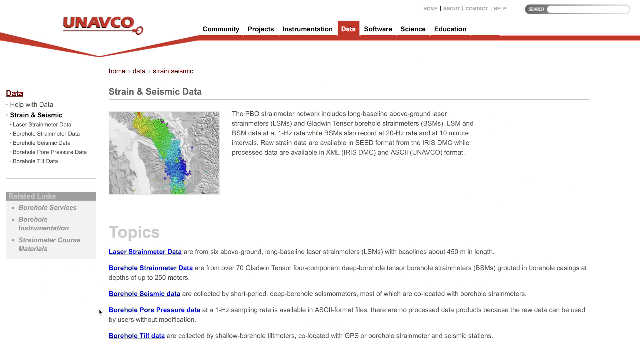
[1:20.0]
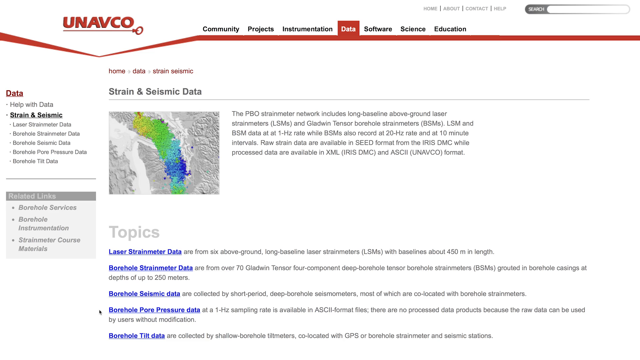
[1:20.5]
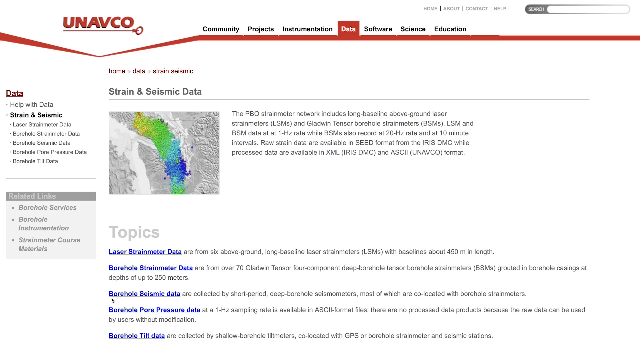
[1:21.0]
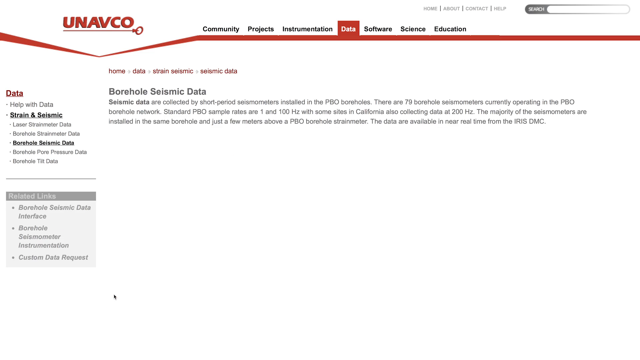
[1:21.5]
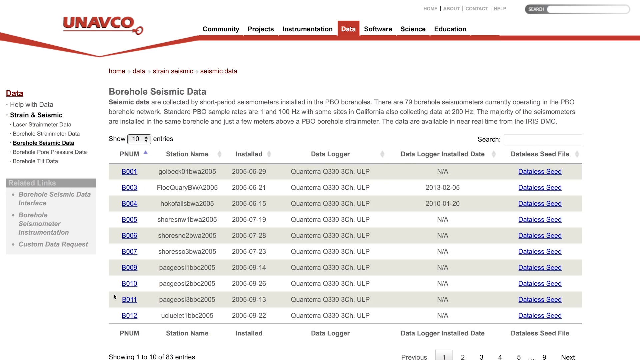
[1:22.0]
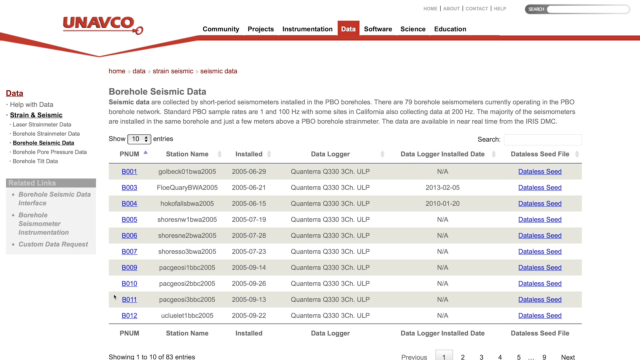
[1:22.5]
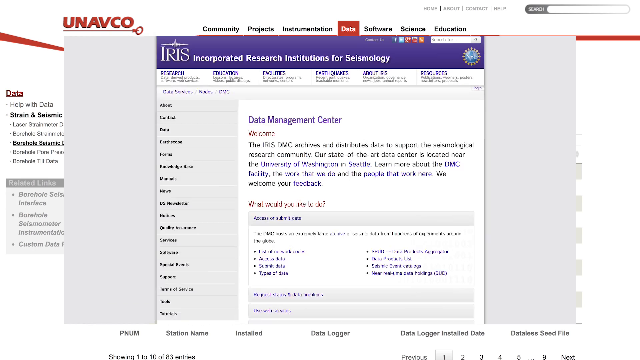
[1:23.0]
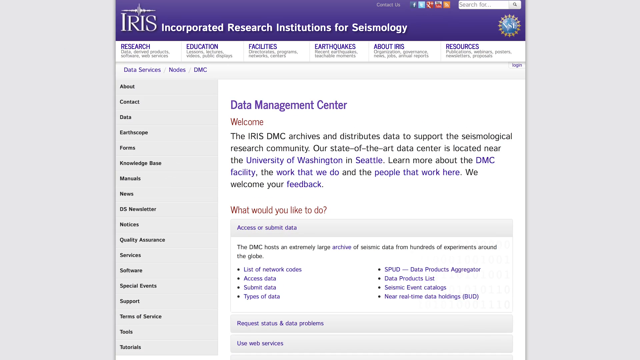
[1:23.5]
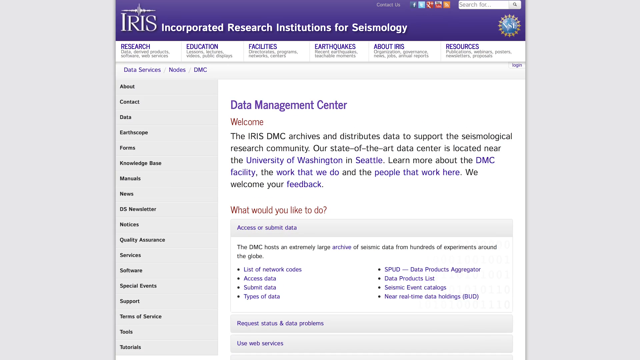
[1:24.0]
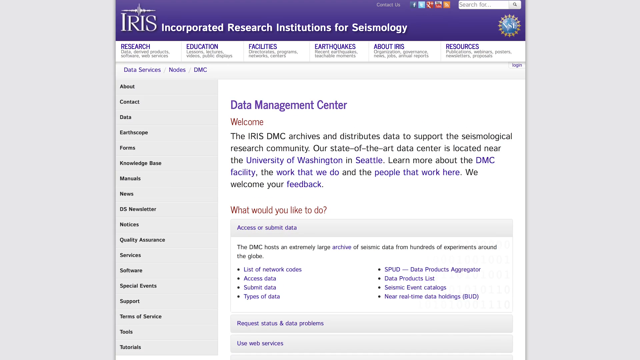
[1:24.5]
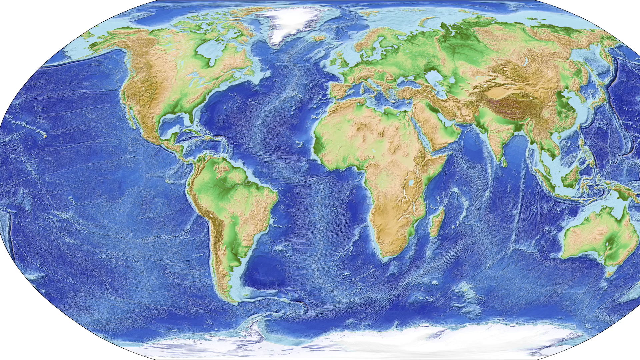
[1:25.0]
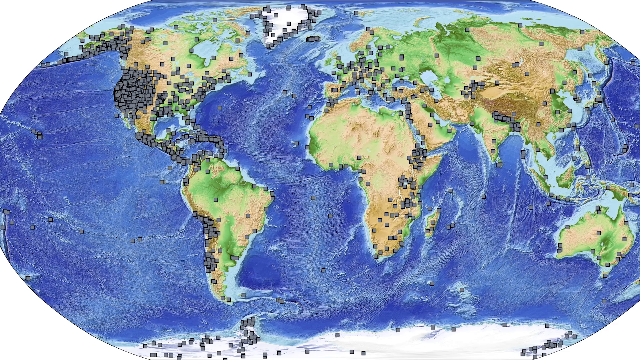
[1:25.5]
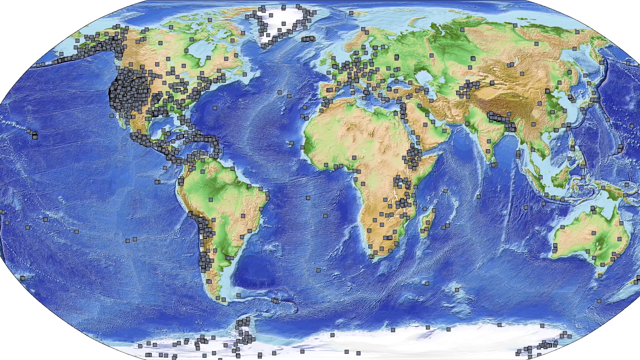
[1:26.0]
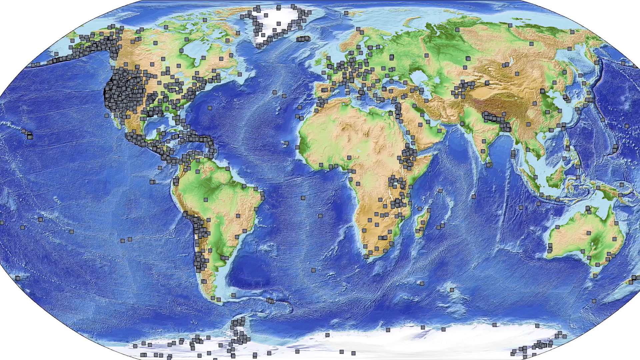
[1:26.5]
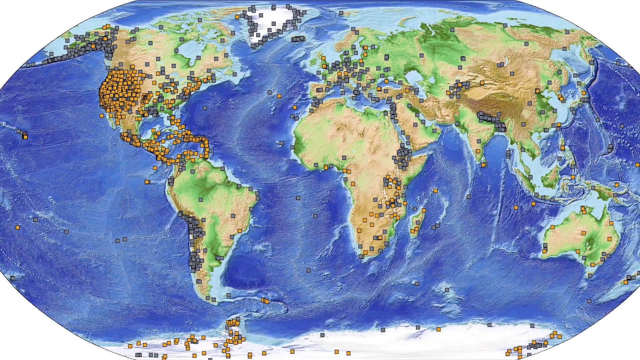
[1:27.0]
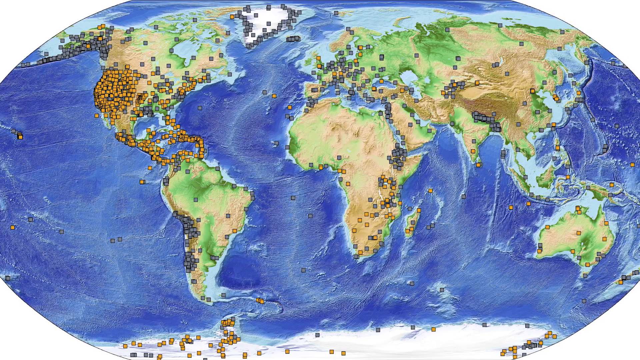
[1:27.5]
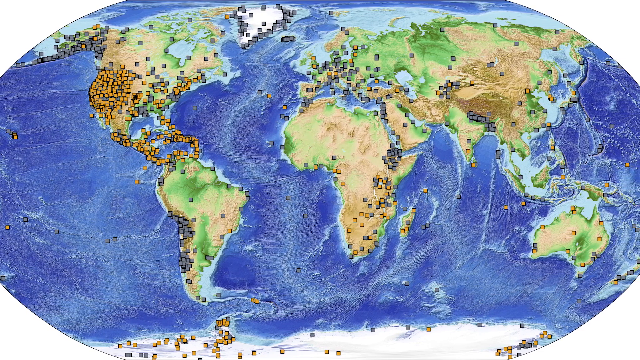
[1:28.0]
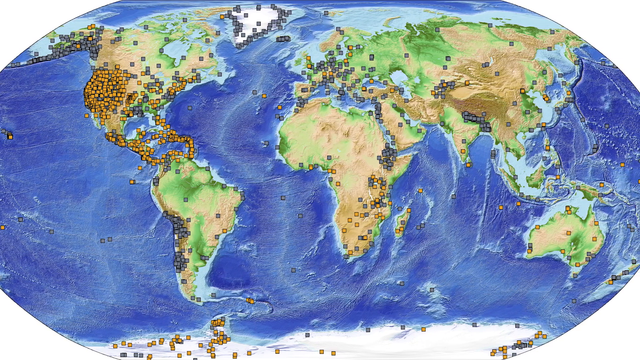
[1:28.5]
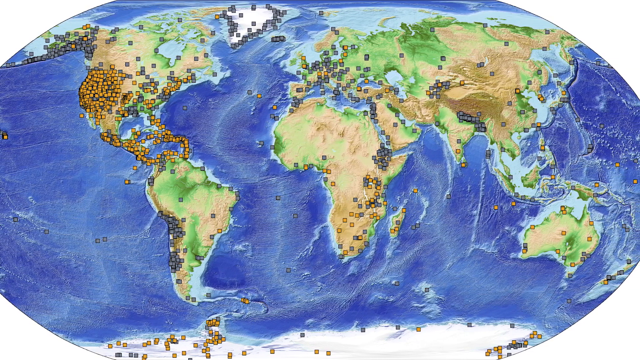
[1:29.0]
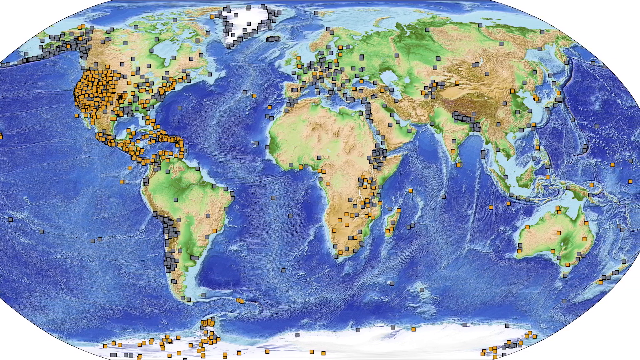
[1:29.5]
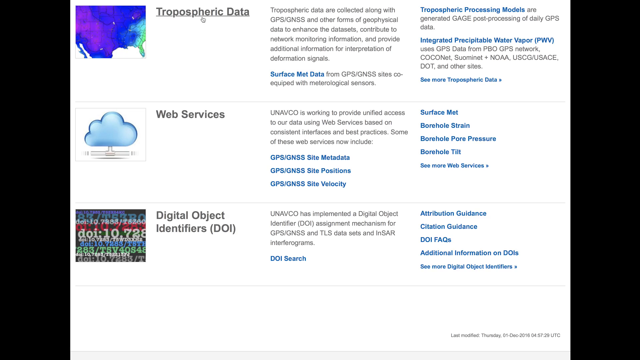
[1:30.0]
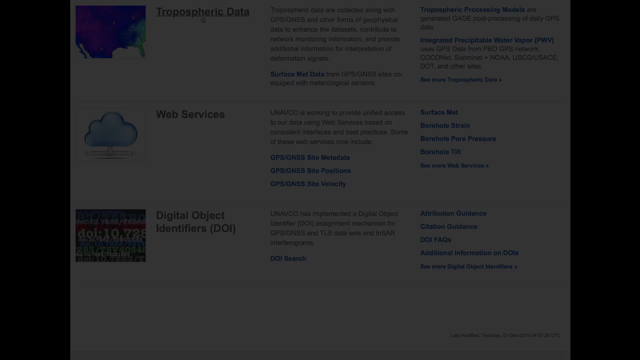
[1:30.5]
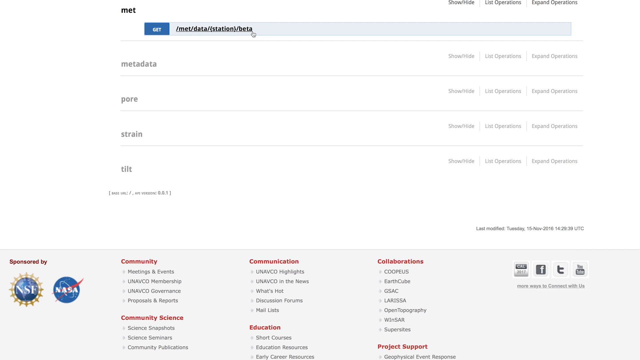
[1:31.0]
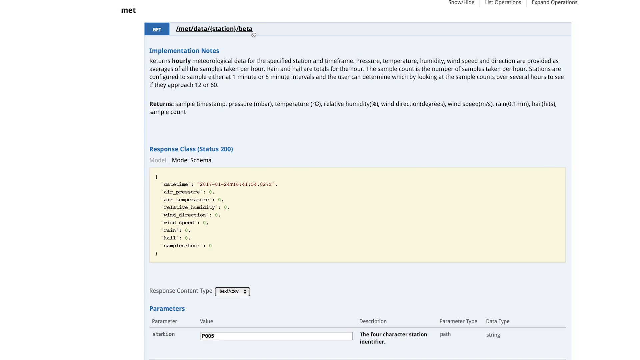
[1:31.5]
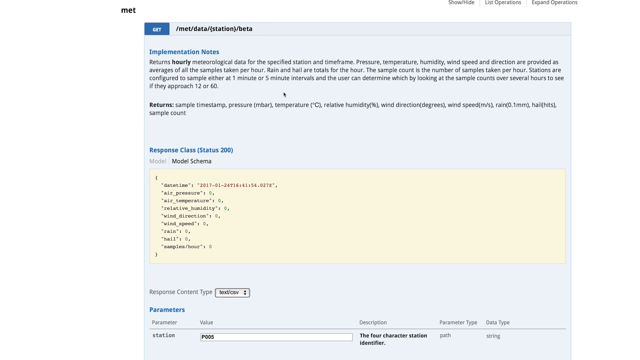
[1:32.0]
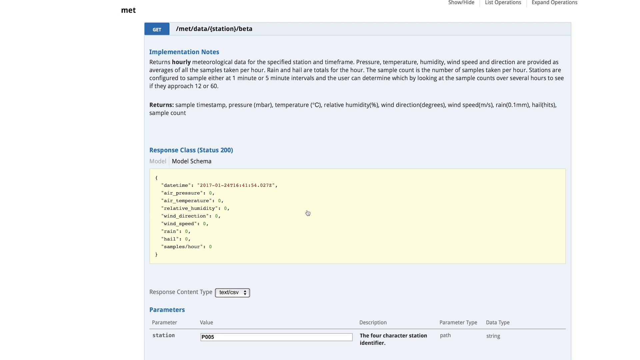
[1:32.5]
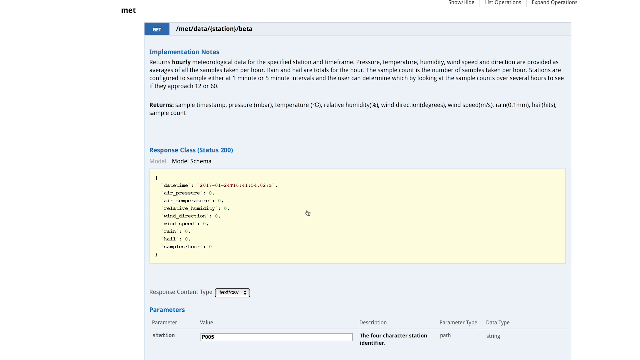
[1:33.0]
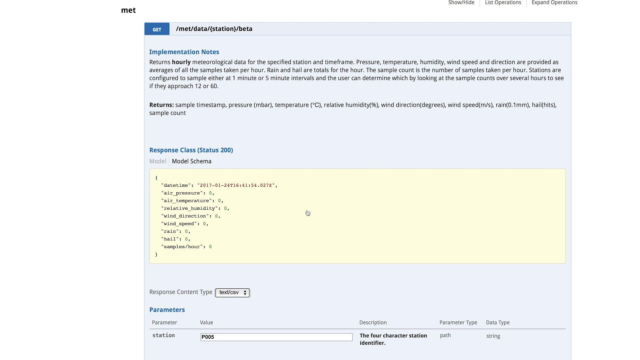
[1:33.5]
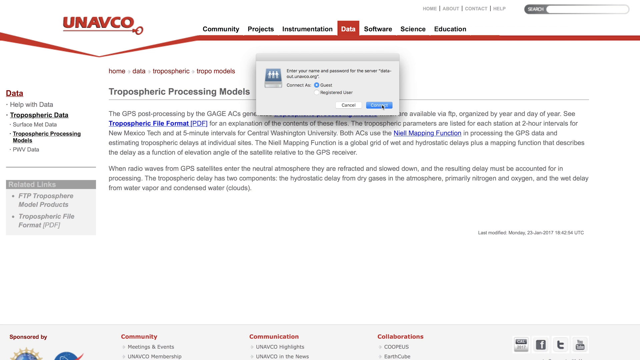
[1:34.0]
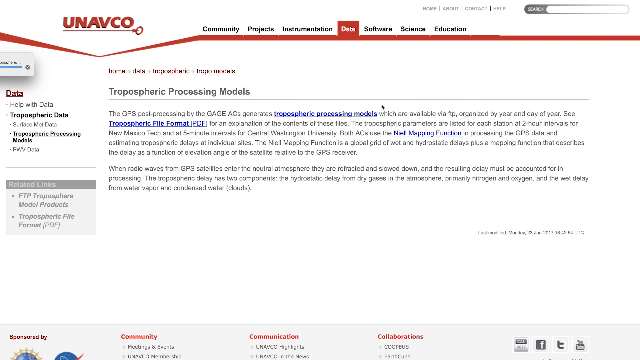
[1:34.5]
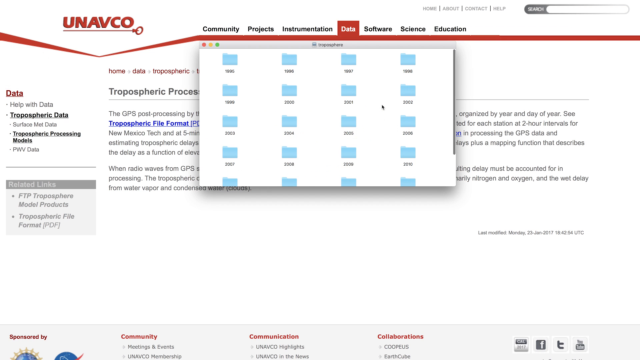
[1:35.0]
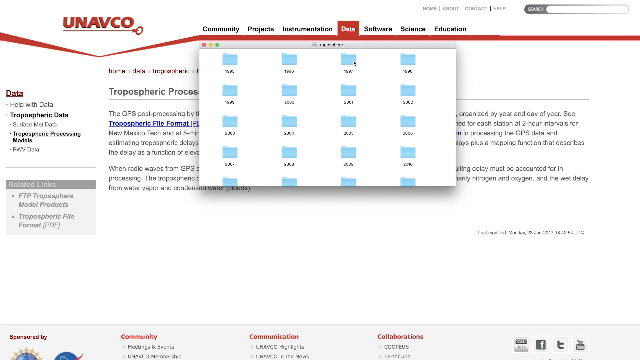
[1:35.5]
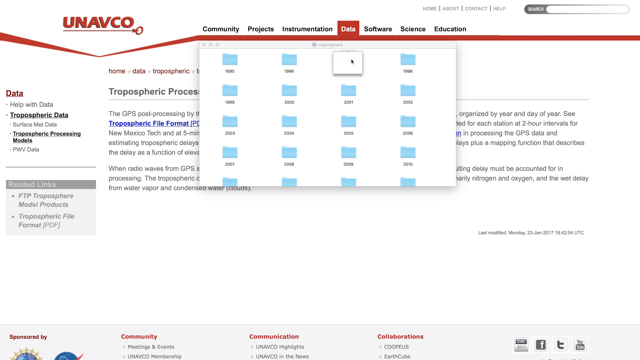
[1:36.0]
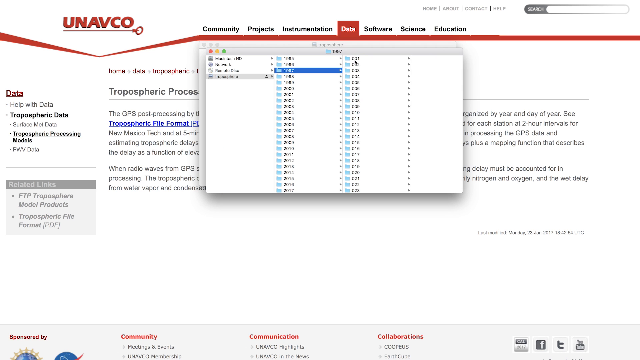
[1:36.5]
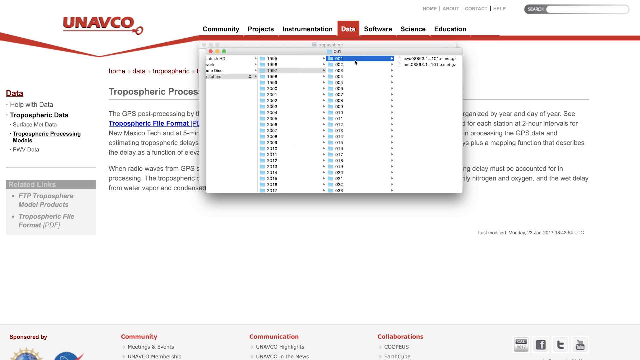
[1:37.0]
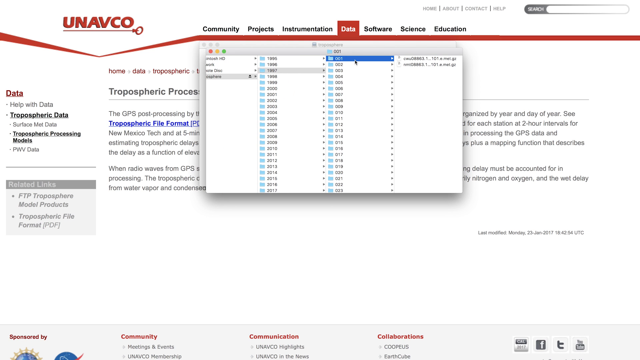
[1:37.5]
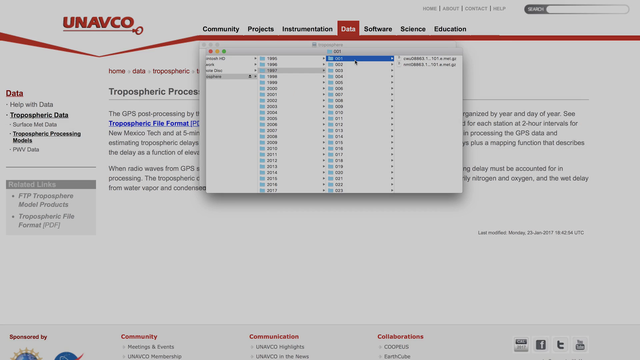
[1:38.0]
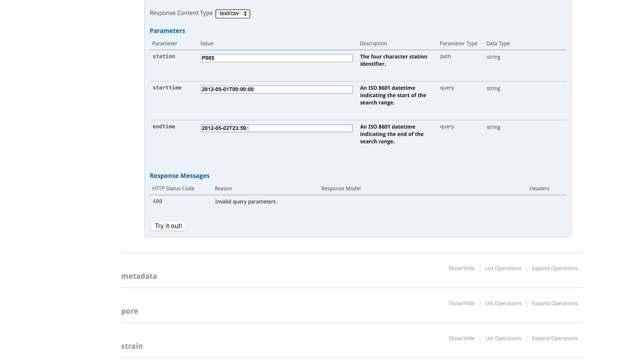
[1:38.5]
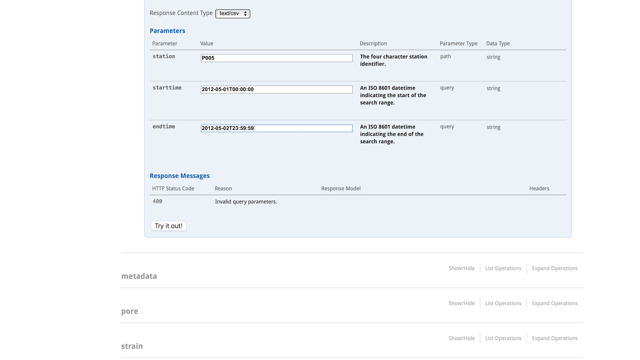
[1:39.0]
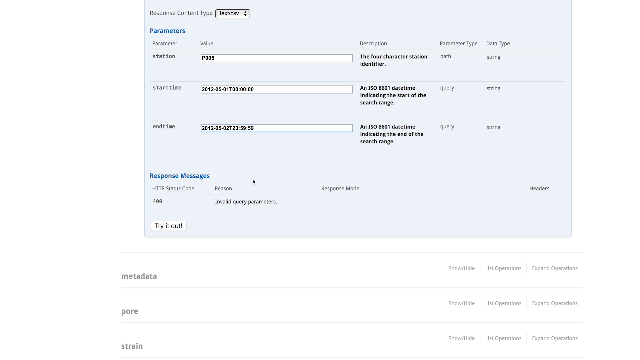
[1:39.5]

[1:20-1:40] The Univacode website is shown under the data tab, on a page titled "Strain and seismic data" with the text "The PBO strain meter network includes long baseline above ground laser strainometers and Gladwin Tensor borehole strainometers." Listed under the topics are "laser strainometer data", "borehole strainometer data", "borehole seismic data", "borehole pore pressure data" and "borehole tilt data".